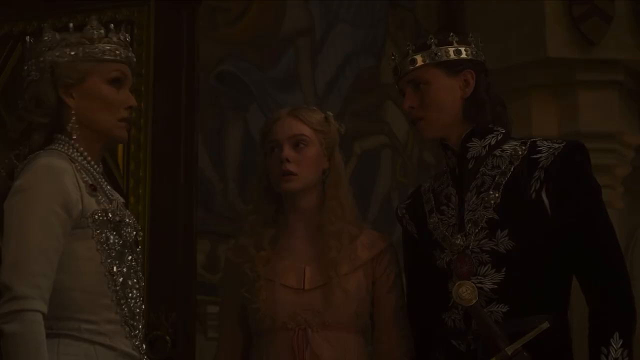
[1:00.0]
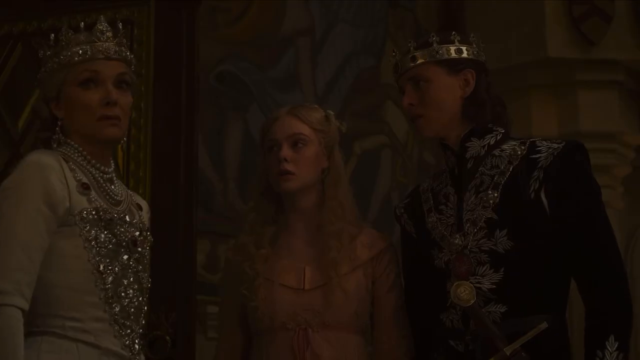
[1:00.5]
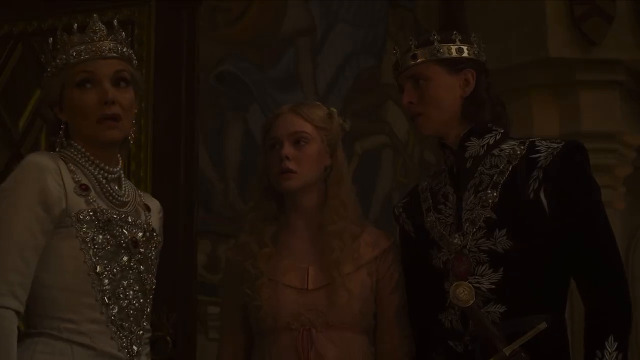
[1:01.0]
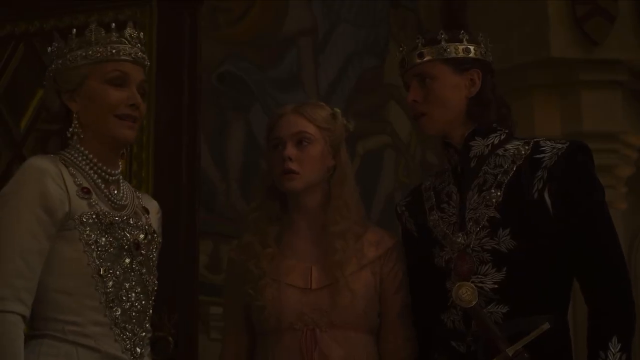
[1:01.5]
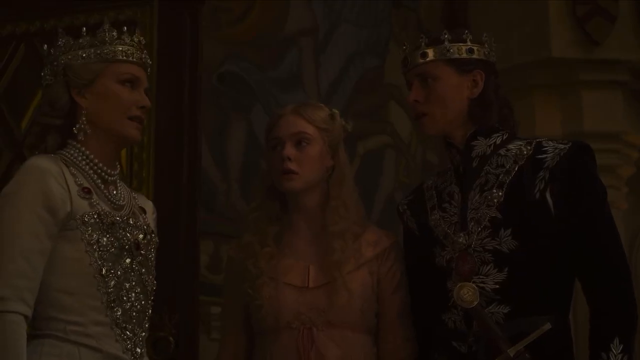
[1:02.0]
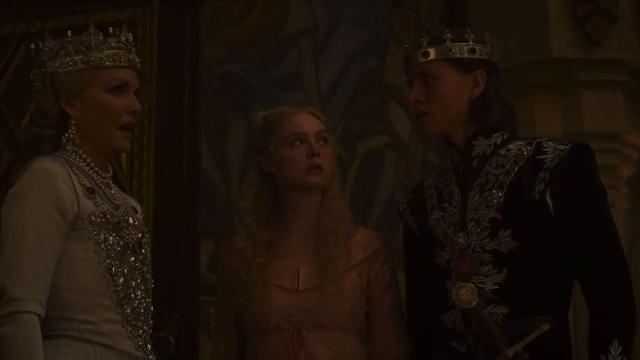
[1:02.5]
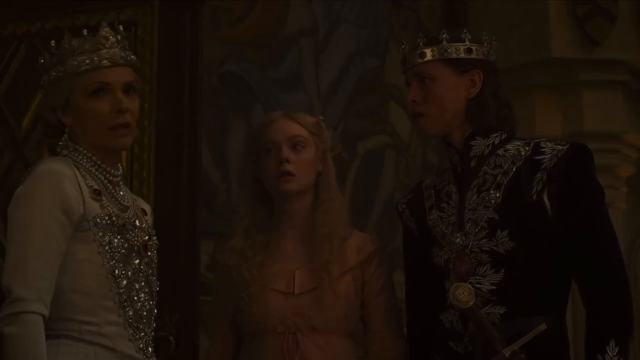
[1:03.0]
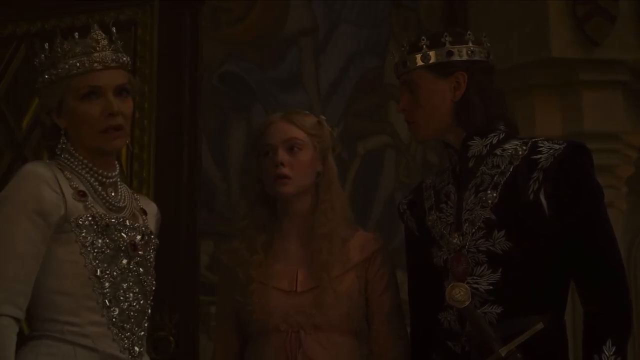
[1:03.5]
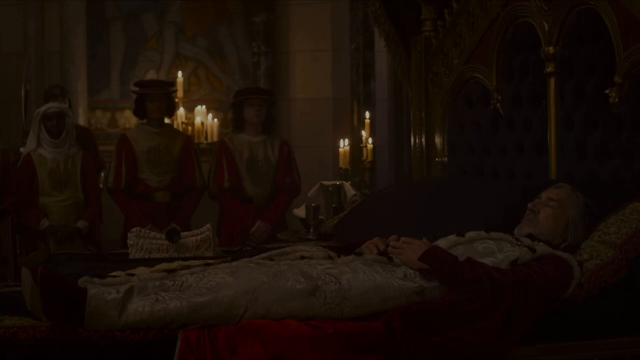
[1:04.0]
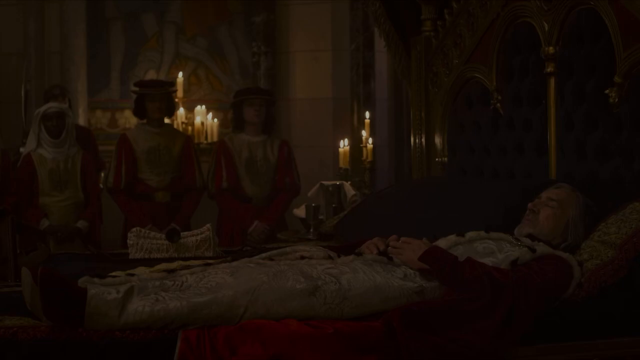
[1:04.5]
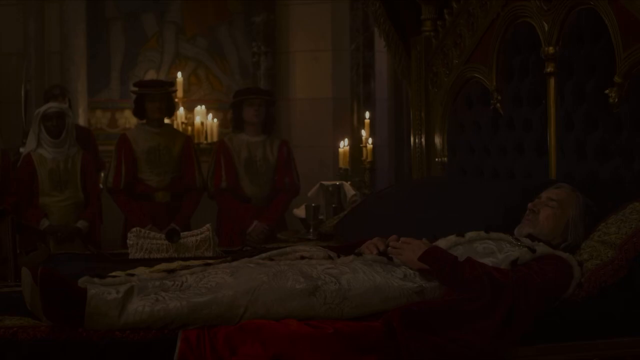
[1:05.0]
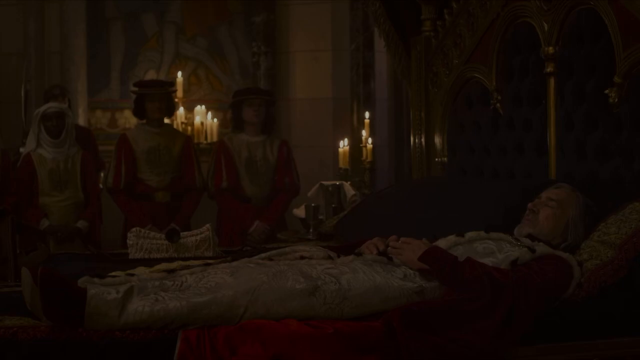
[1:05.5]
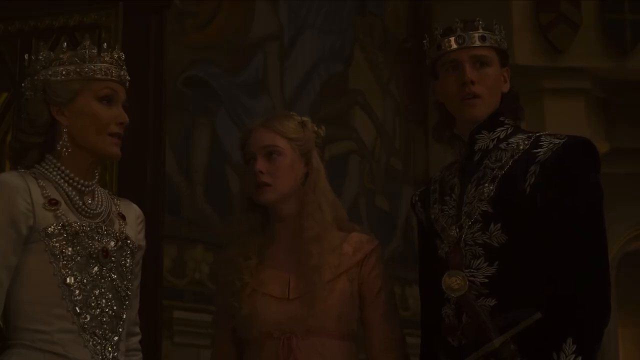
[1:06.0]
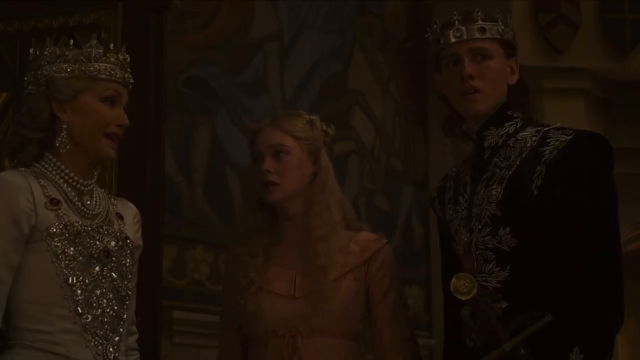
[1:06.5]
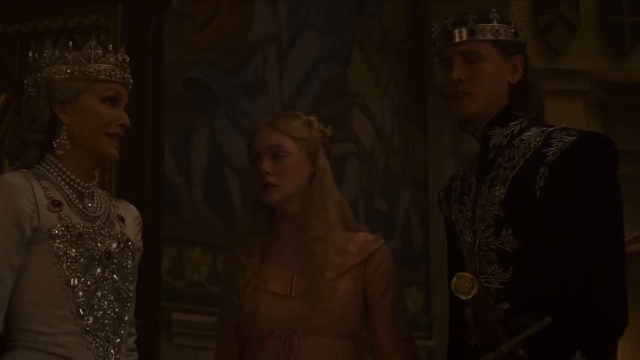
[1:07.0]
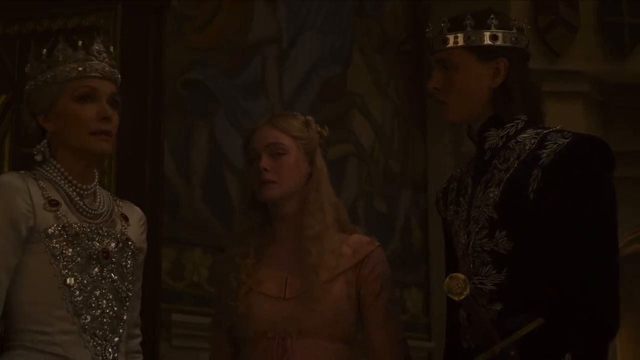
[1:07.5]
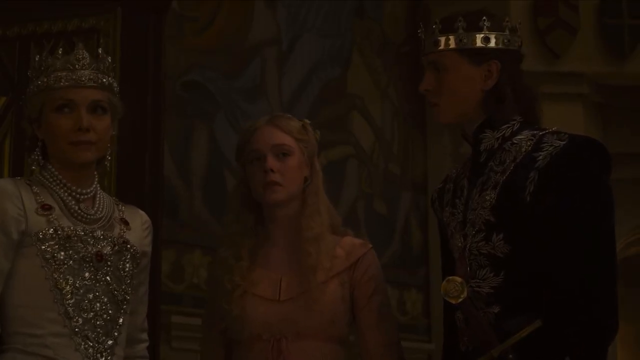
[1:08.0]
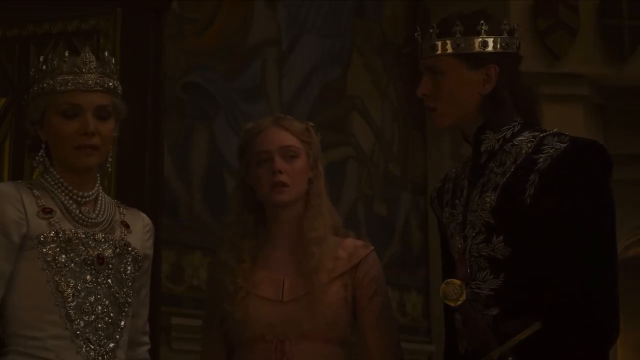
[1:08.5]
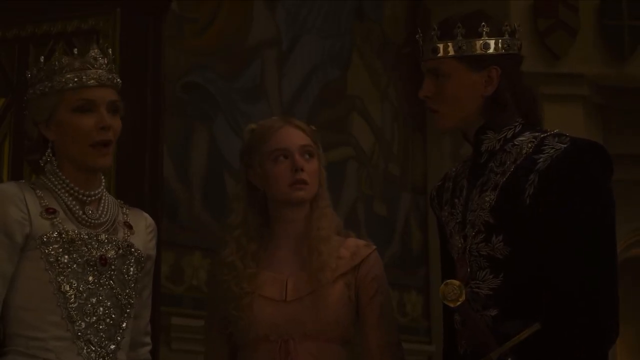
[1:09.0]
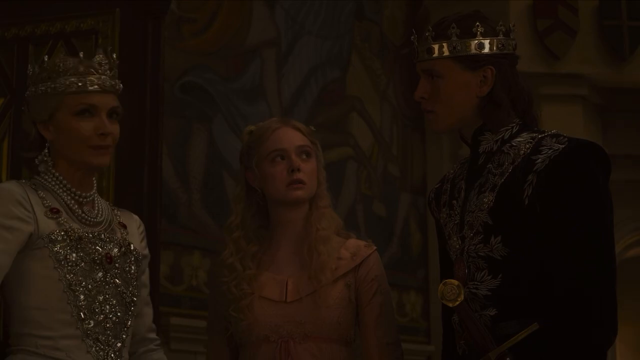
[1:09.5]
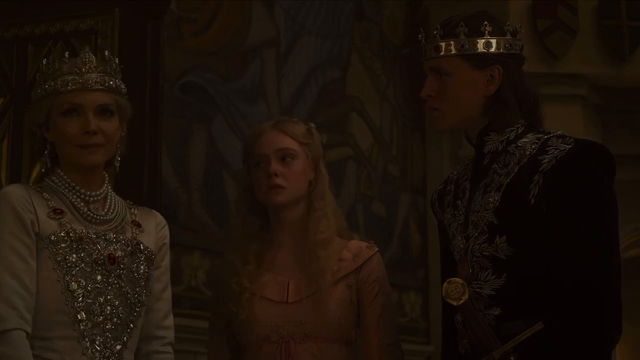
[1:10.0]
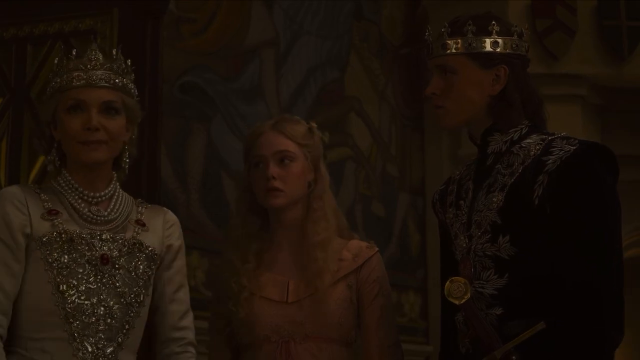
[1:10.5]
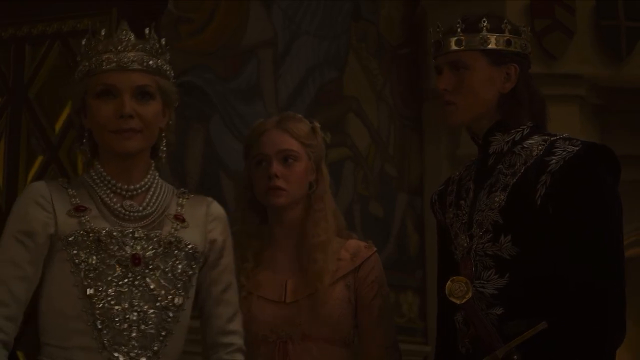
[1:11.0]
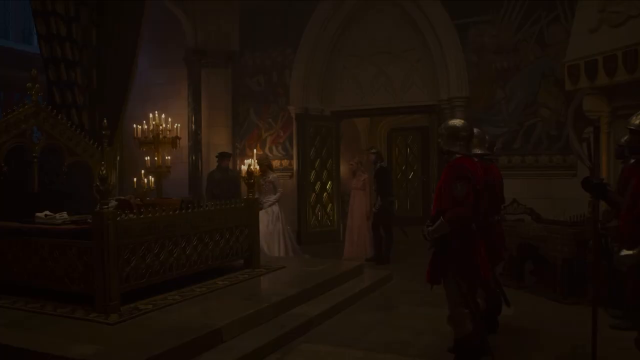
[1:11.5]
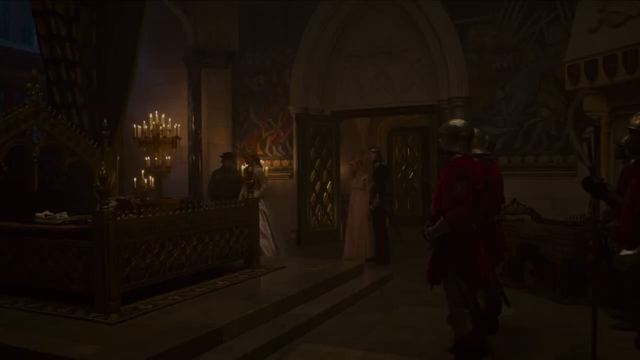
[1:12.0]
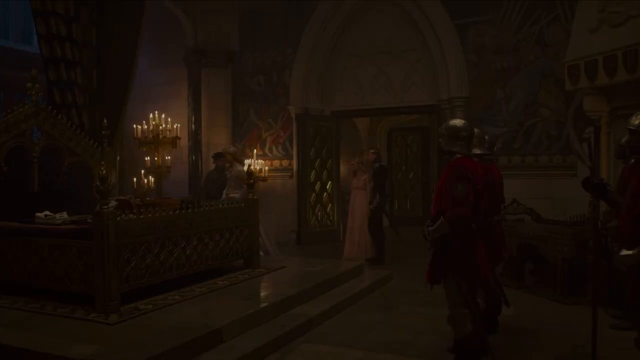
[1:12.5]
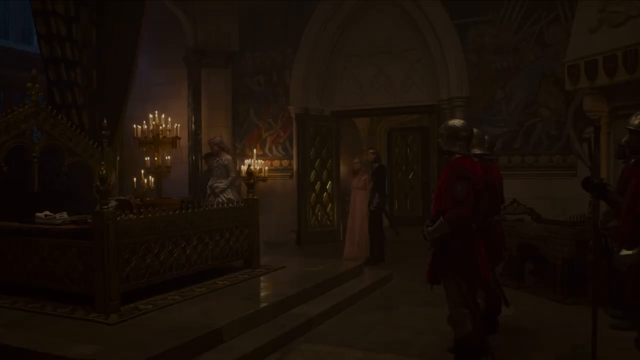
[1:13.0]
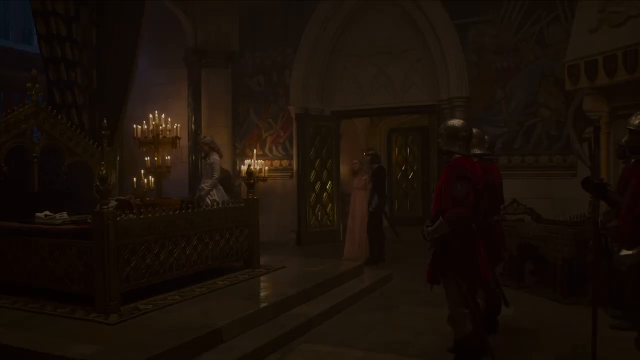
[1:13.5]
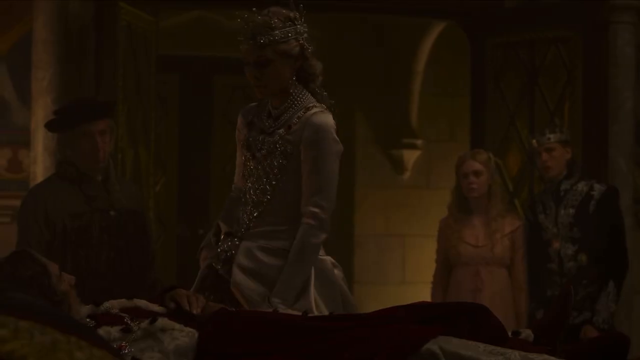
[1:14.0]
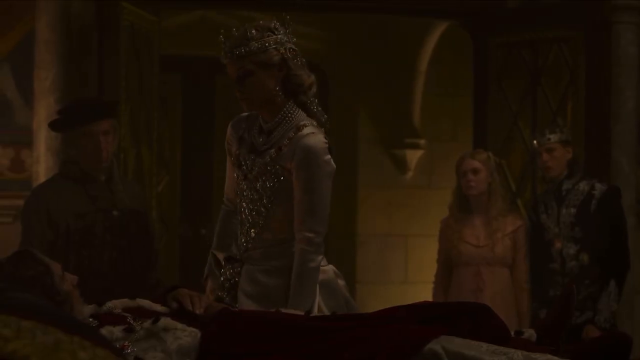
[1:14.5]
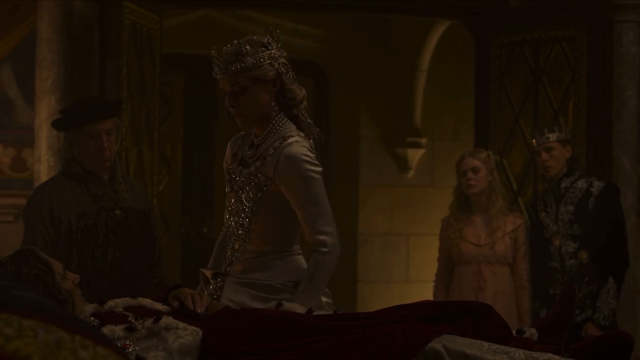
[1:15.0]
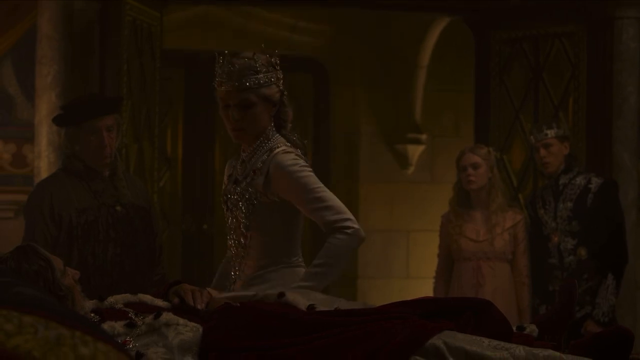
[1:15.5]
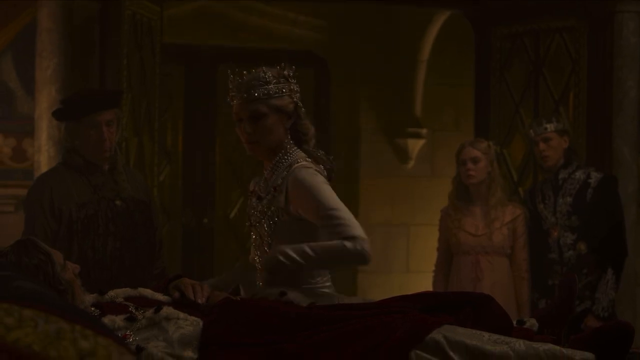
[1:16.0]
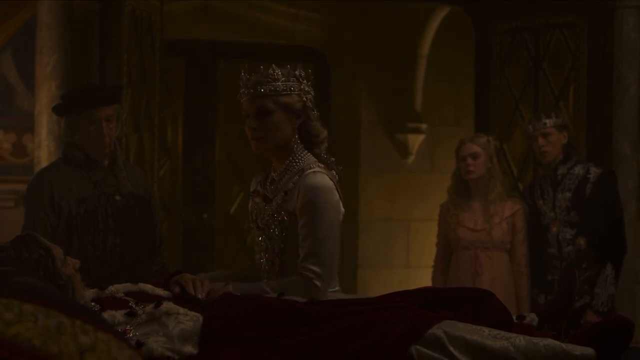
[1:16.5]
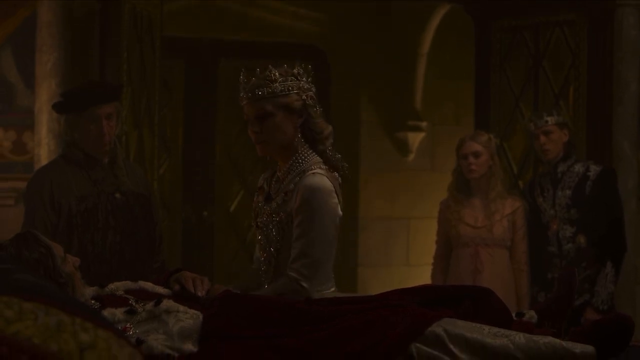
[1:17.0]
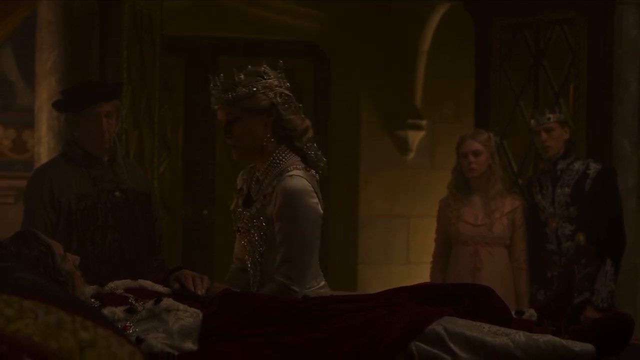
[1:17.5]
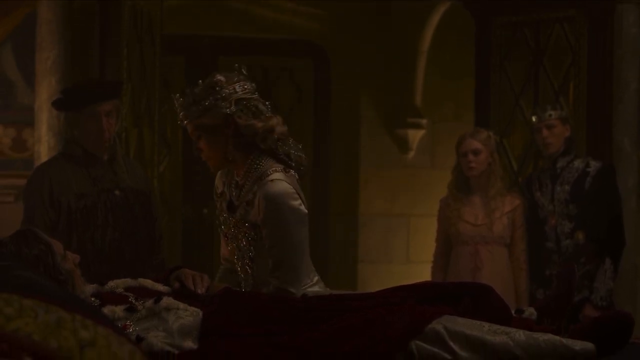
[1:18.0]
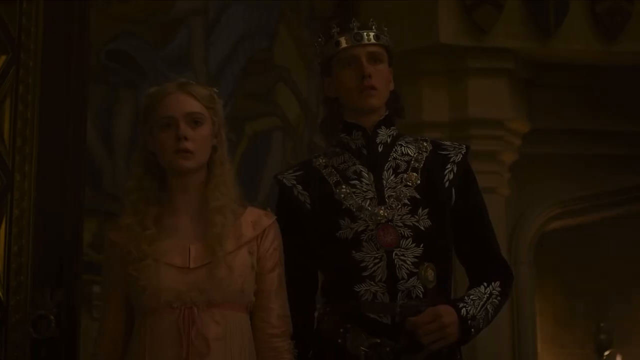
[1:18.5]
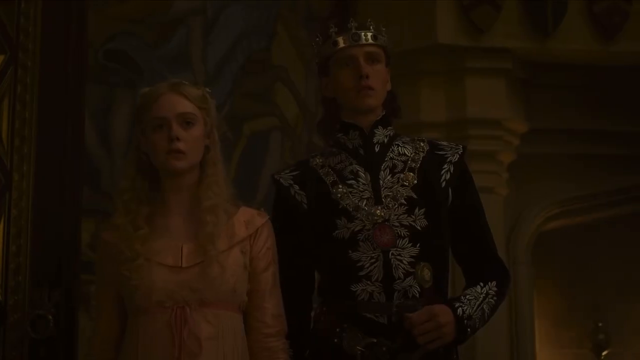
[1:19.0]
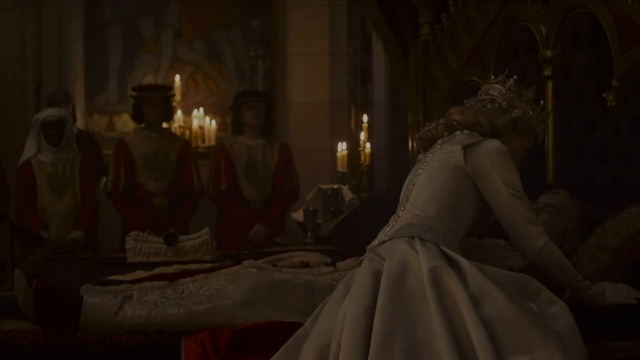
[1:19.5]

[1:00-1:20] Palace guardians guard the king. More and more lit candles are by his side. The Queen Mother goes closer to him and kisses him on the forehead. The king is apparently in a coma but not dead. The prince, the princesses, the soldiers, the wardens, the cleaners and other palace workers look hopeful.